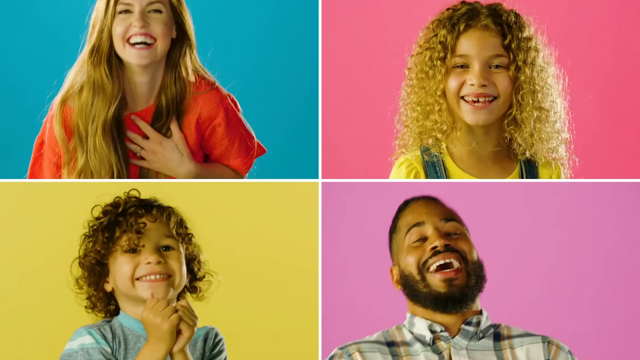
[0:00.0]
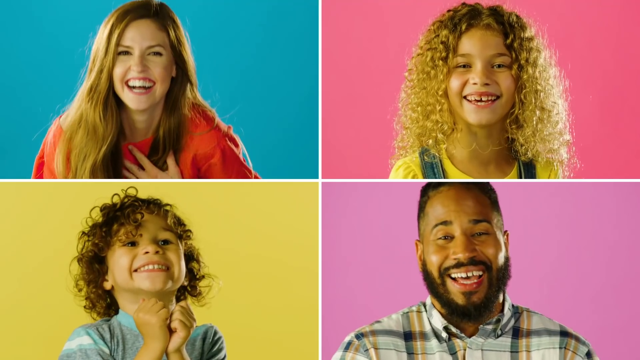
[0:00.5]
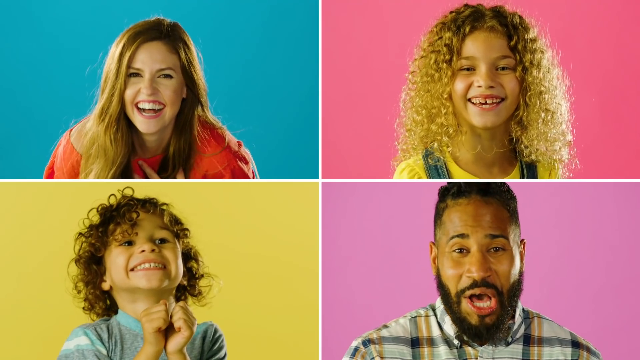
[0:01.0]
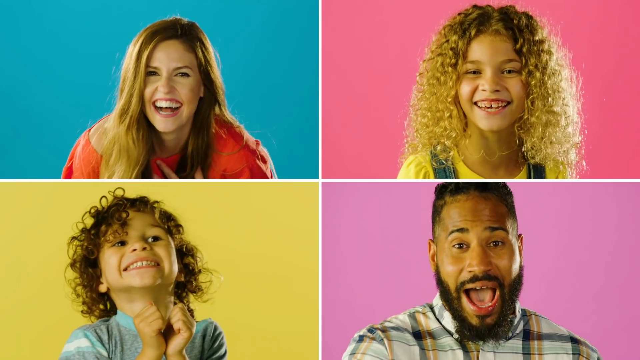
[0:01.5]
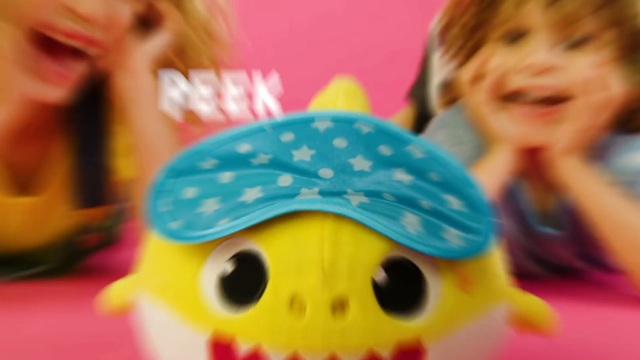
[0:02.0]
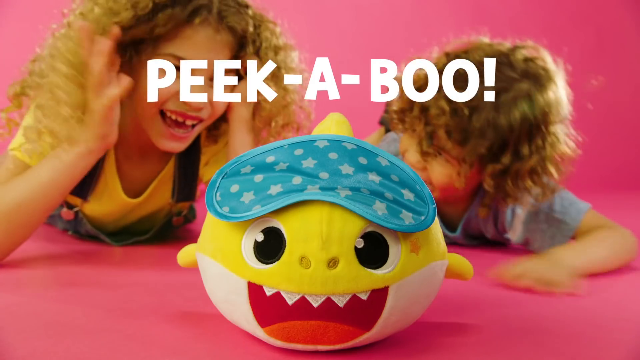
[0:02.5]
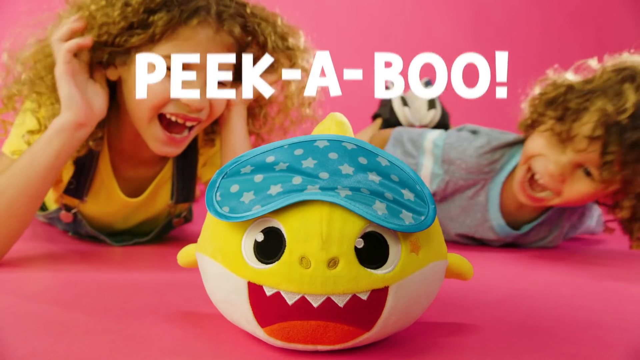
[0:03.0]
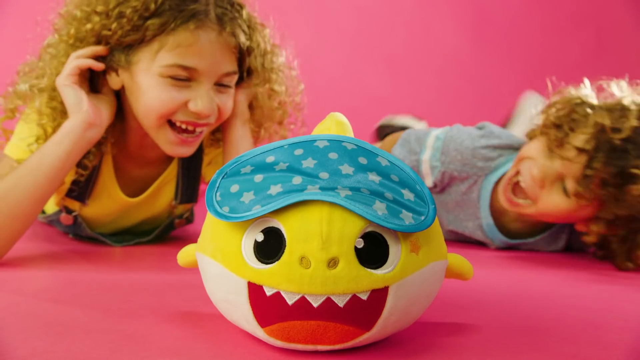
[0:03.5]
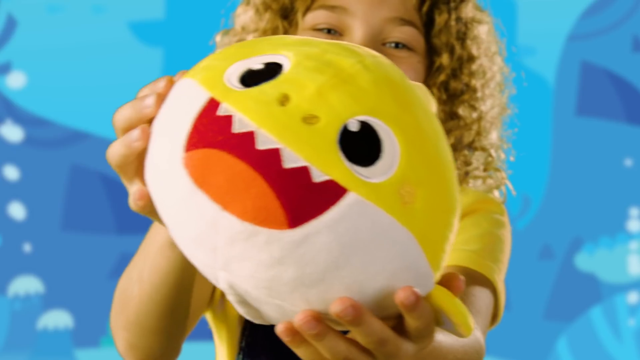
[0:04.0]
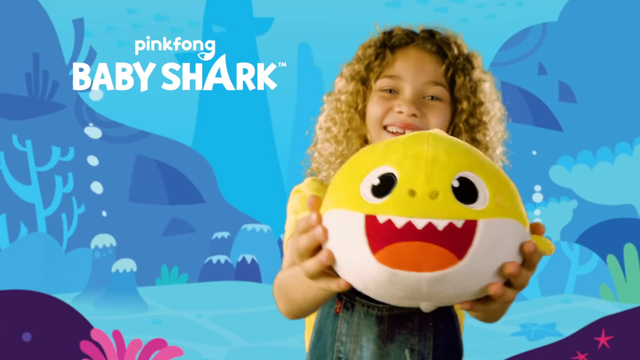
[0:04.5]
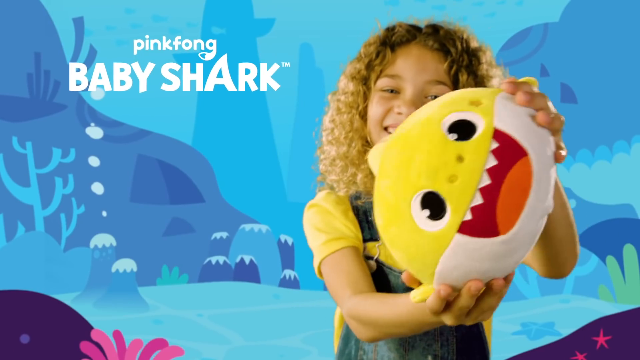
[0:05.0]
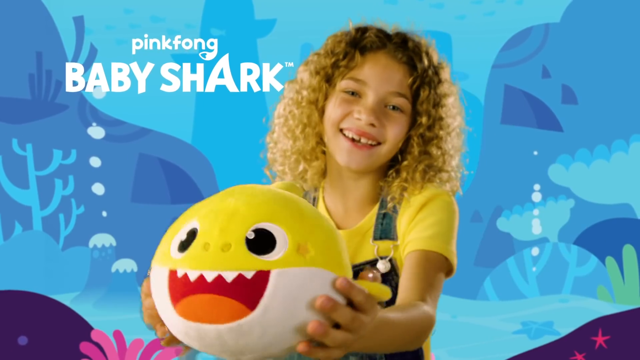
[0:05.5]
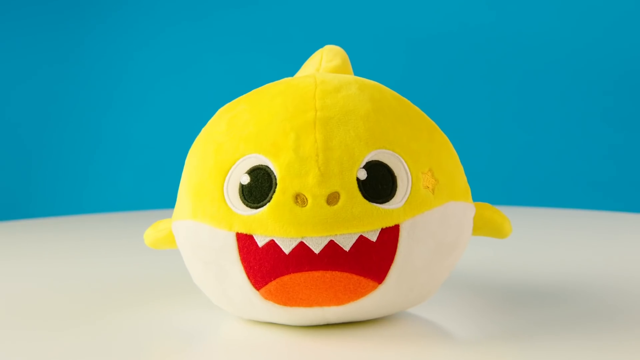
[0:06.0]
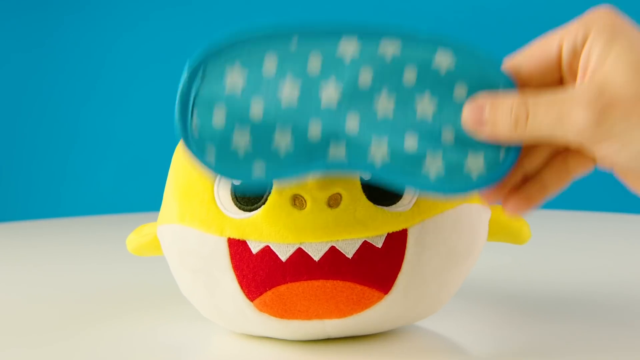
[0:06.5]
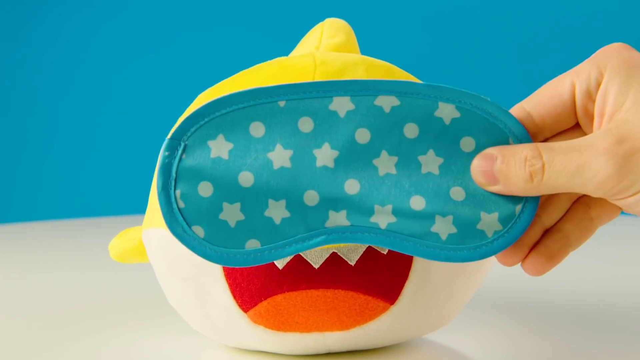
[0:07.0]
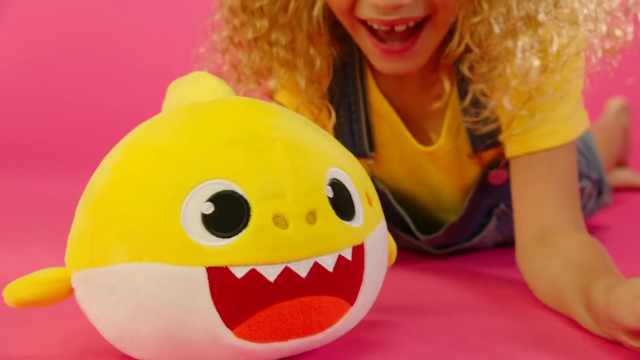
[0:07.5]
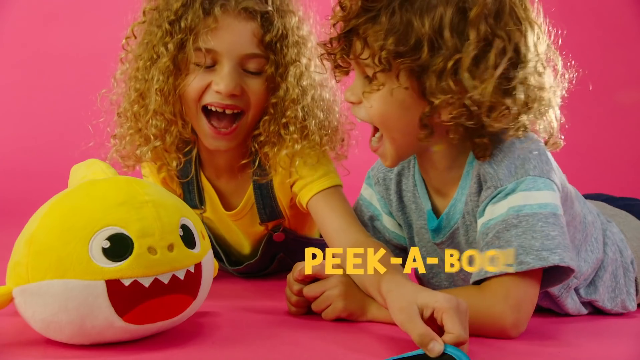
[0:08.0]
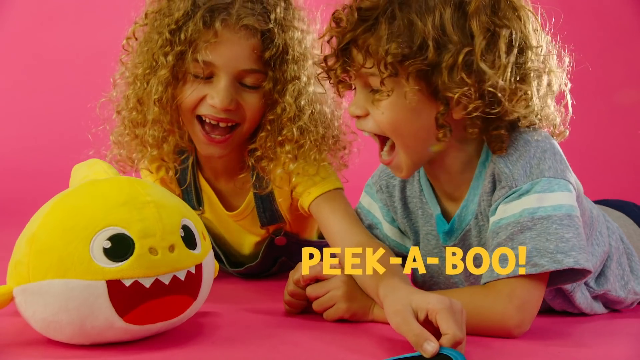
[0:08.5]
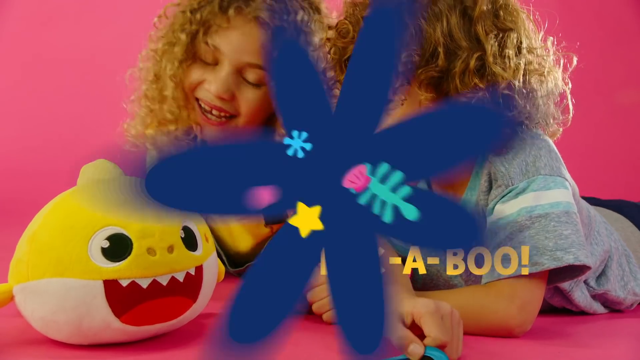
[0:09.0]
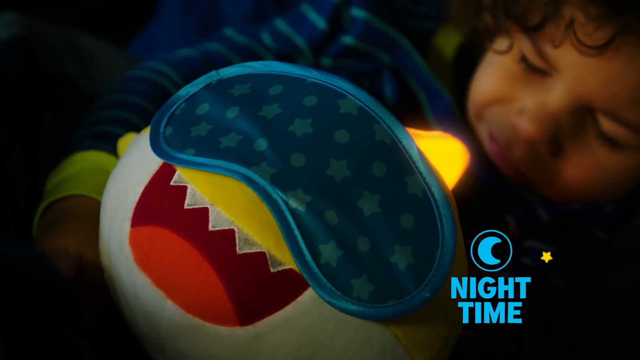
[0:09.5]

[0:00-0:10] The video begins with a split screen divided into four squares, each with a different background color. In the top left a woman is laughing, in the top right a little girl is laughing, in the bottom left a little boy is laughing, and in the bottom right a grown man is laughing. Each person is shown laughing in their individual square. The screen then changes to a little toy monster with a night mask on its head, the kind pulled over the eyes. Behind it, the two children from the boxes are laying on the floor with their hands on their faces. White text reads "peekaboo!" and the children laugh. Next, the little girl holds a little stuffed animal and moves it around in front of an ocean background, with white text reading "Pink Fong Baby Shark". The baby shark is shown up close. The little girl then puts the night mask over the baby shark's eyes and pulls it off, and the two children look at it, very excited, as "peekaboo" appears in the bottom right corner. The little boy is then shown sleeping at night holding on to the toy, which has a little night mask on its eyes.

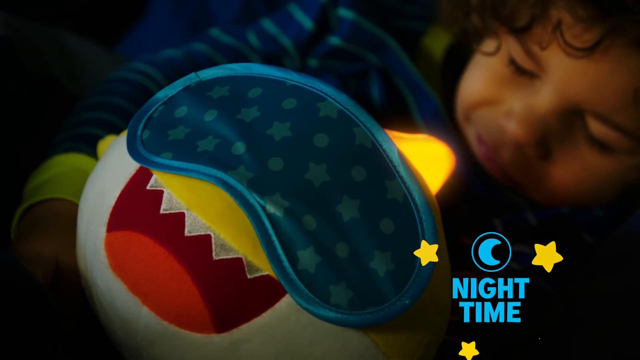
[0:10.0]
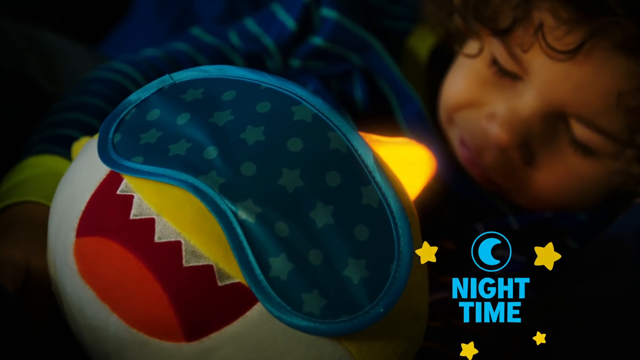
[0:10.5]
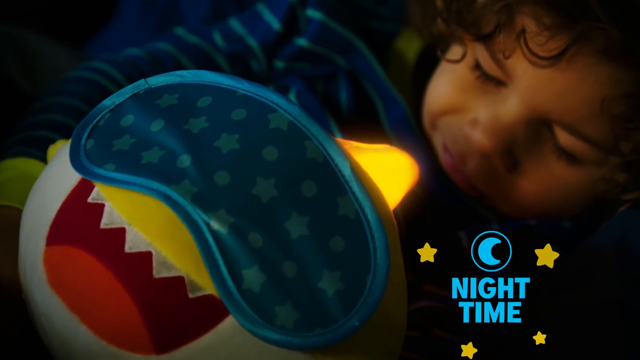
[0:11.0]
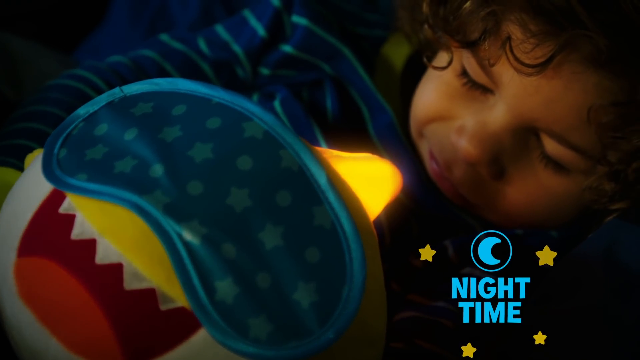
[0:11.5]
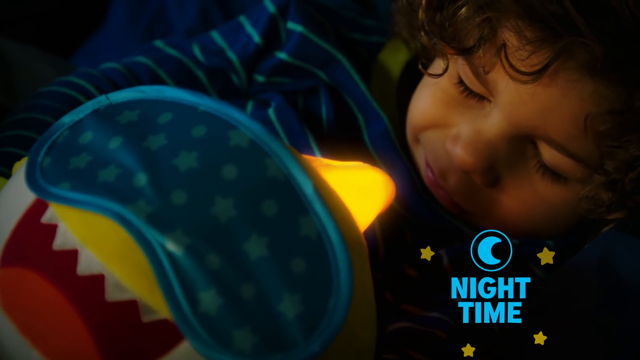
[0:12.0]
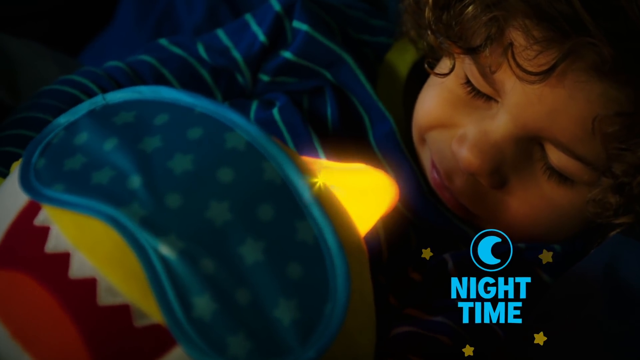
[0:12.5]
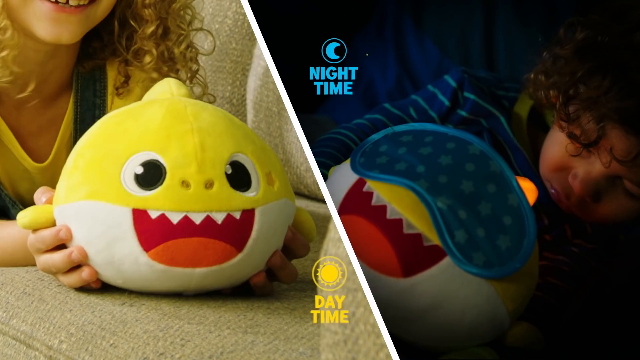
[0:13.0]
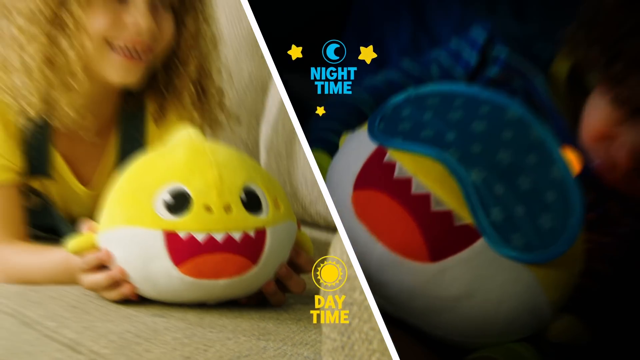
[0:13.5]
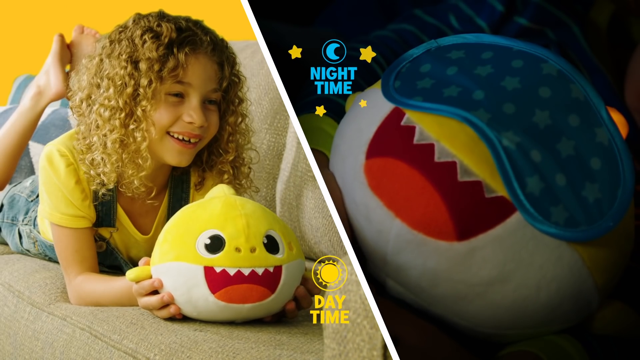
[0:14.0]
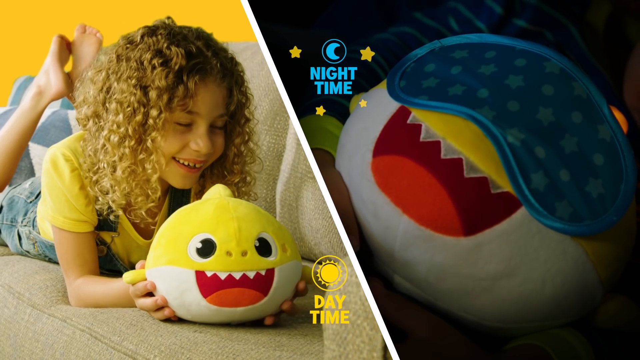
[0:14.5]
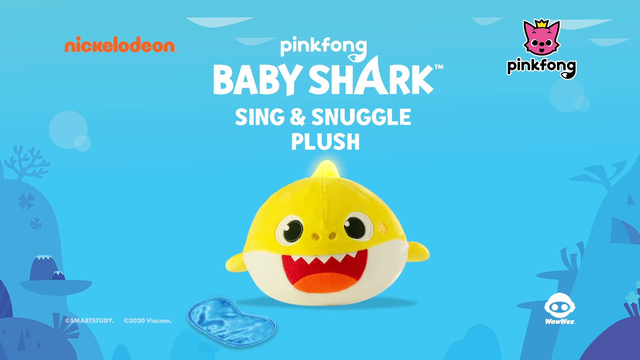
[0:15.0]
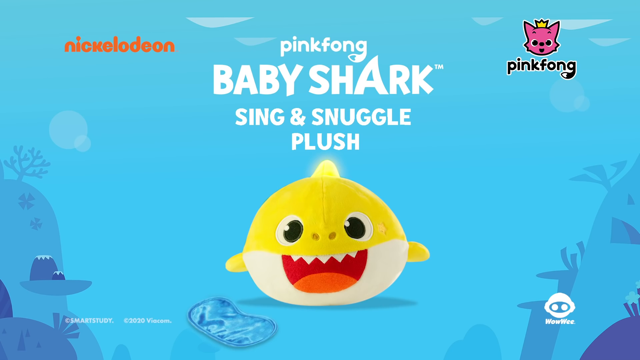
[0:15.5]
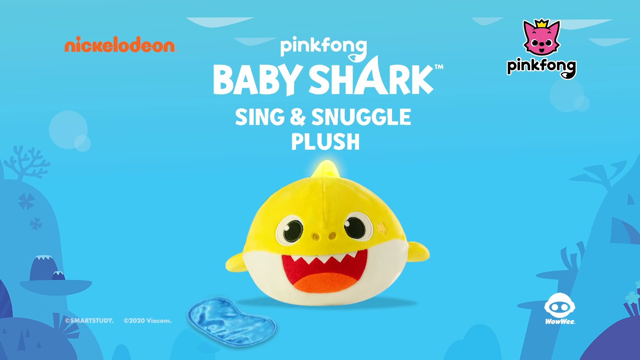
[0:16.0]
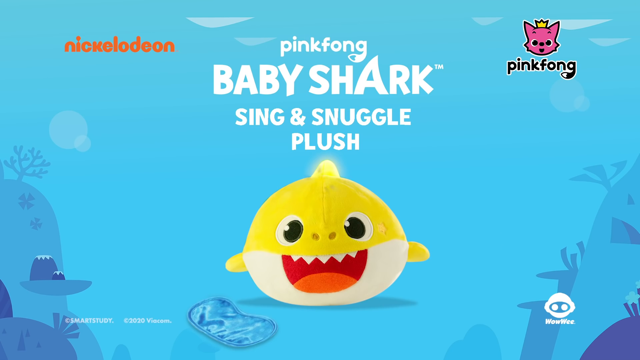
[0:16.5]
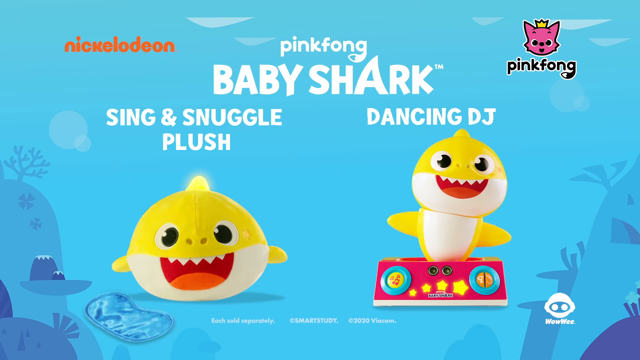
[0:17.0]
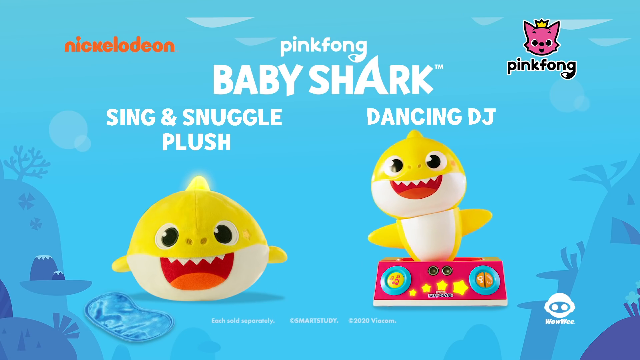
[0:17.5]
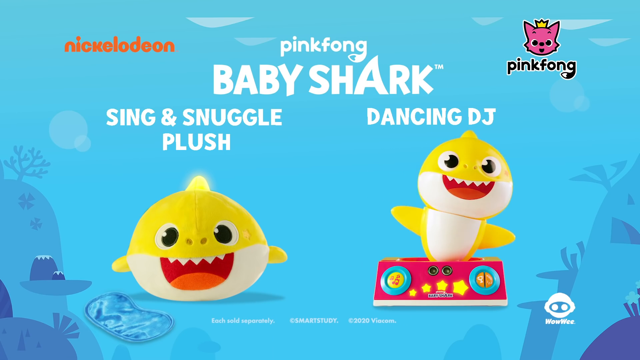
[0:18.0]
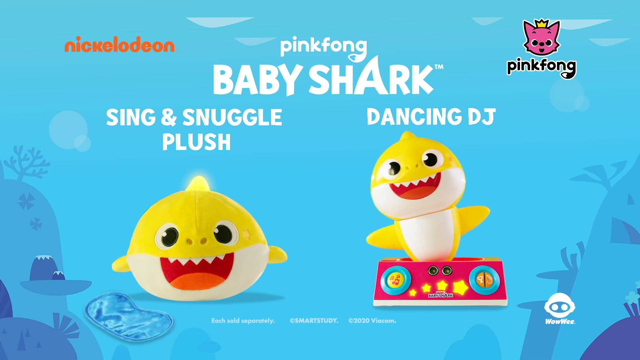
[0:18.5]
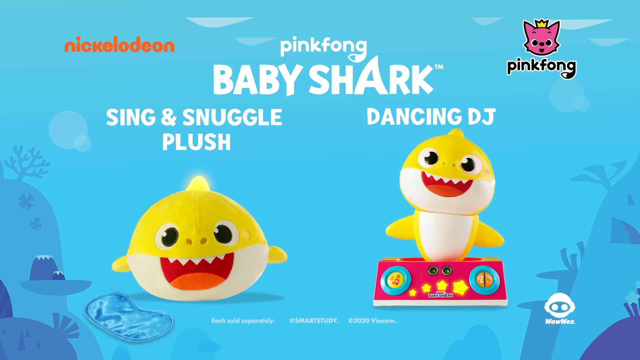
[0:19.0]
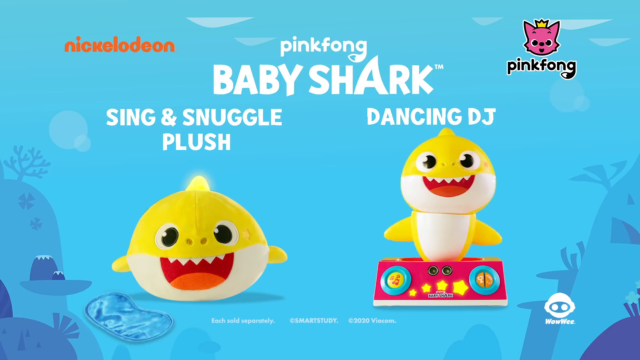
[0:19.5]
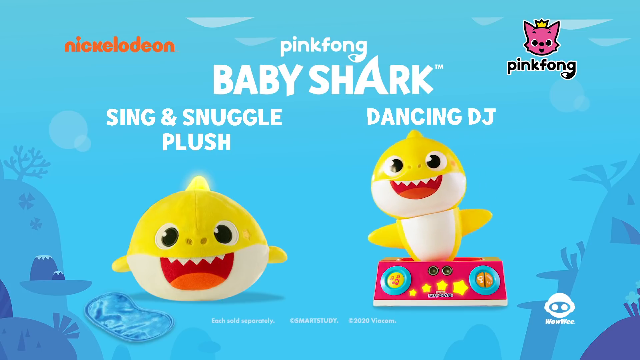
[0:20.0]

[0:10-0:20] A little boy sleeps in his bed, holding onto a yellow stuffed toy that looks like a shark. The shark has a blue night mask with lots of stars on it over its eyes. The camera pans over to the boy's face, and he keeps his eyes closed. The screen then splits in two: on the left, a little girl is lying down on the couch holding the little shark, and on the right the little boy continues sleeping. Text on the right side says "nighttime" beside a picture of a moon with a circle around it and a yellow star, while at the bottom of the left side it says "daytime" with a circle containing a sun image. The left side zooms out to show more of the little girl's body laying on the couch, and she is laughing. The scene changes to a blue ocean illustrated in 2D with an actual model of the plush shark toy. White text in the center reads "Pink Fong Baby Shark Sing and Snuggle Plush", the upper left corner says "Nickelodeon", the upper right corner says "Pink Fong", and there is a little cat logo on the top. The scene then kind of explodes and the scenery in the back changes, revealing another shark-like toy that stands upright instead of swimming. It is sitting inside some kind of pink box with stars on it and is dancing, moving left and right, with white text above it that says "Dancing DJ".